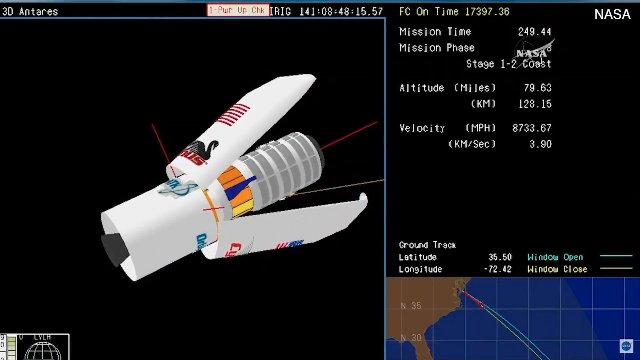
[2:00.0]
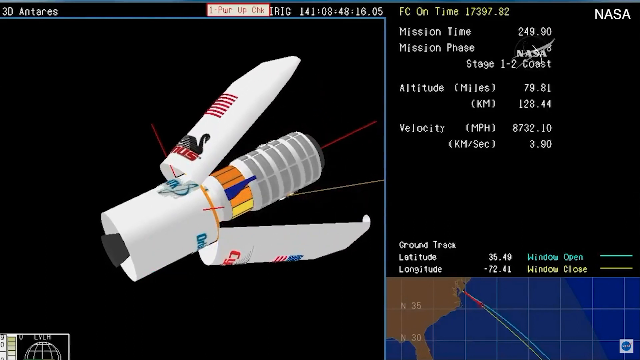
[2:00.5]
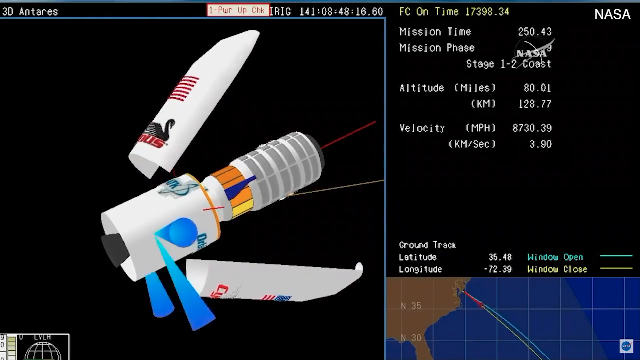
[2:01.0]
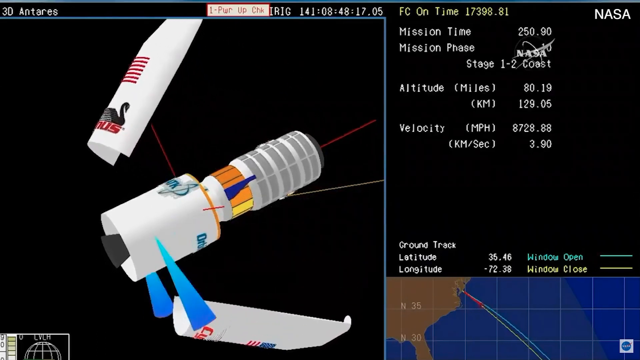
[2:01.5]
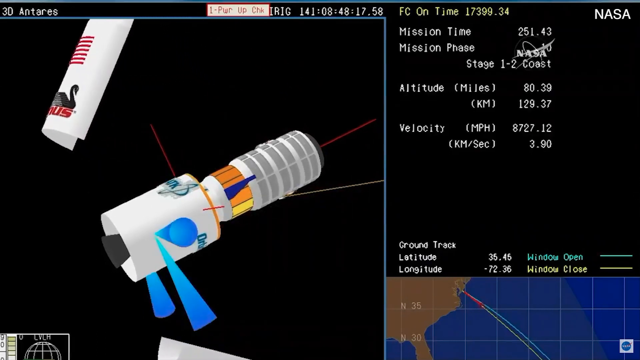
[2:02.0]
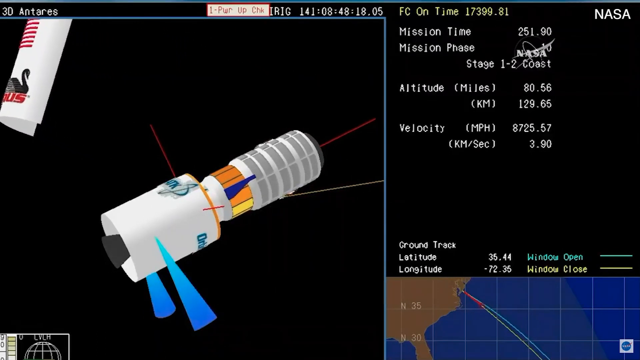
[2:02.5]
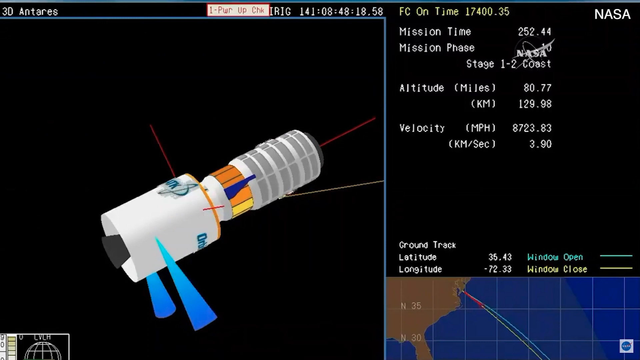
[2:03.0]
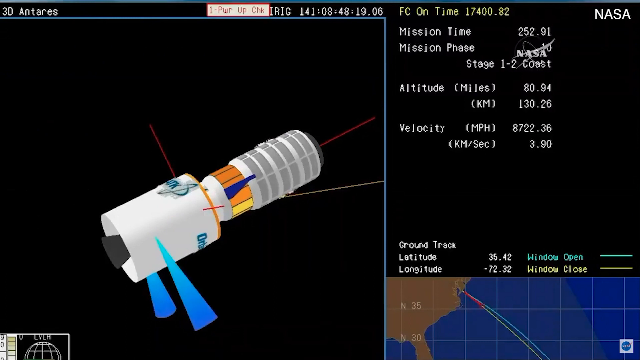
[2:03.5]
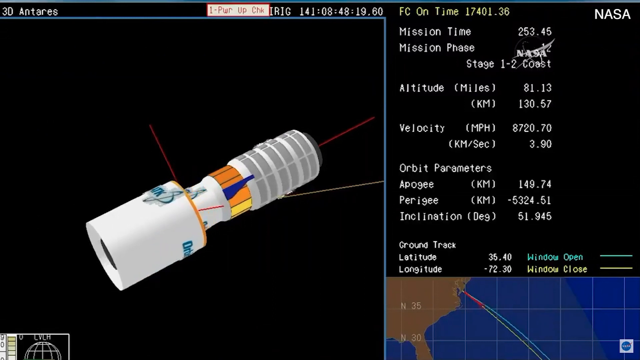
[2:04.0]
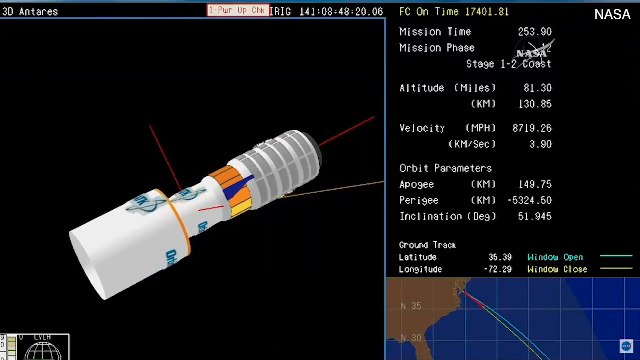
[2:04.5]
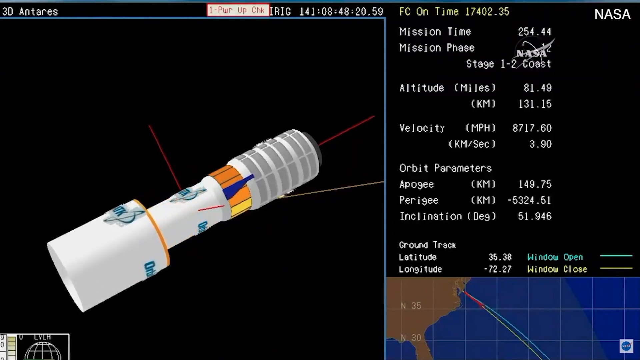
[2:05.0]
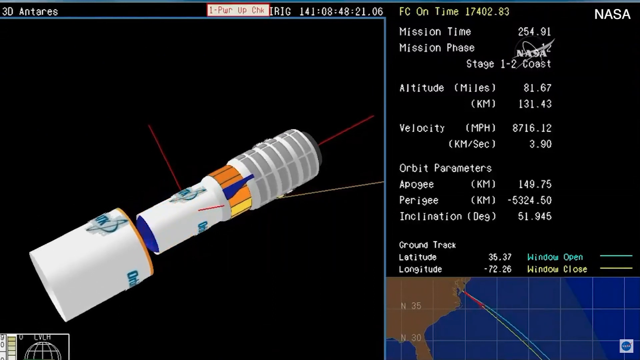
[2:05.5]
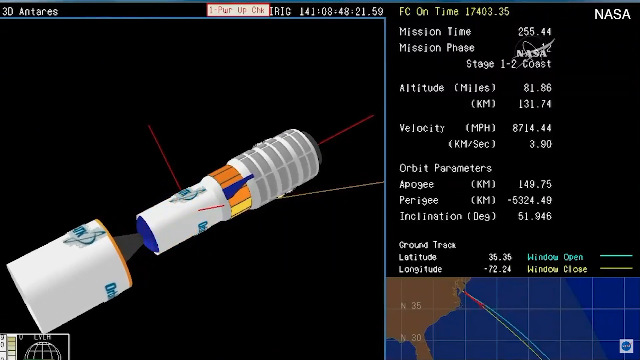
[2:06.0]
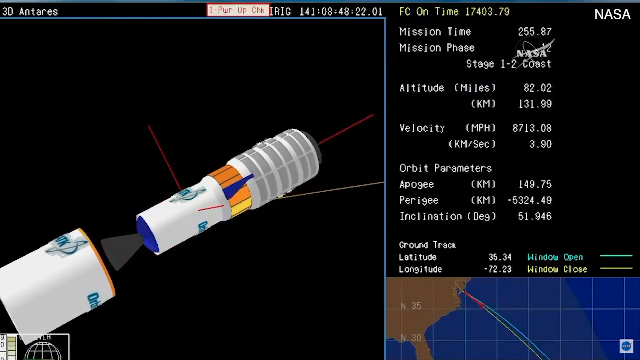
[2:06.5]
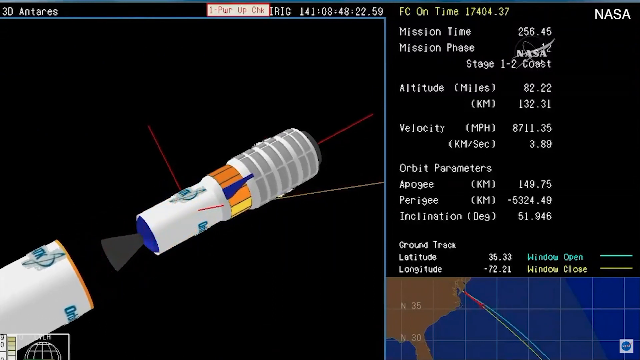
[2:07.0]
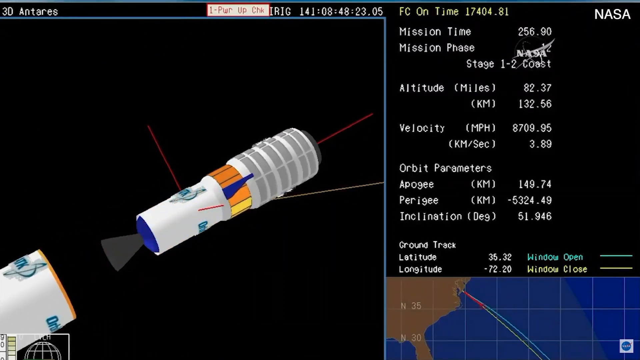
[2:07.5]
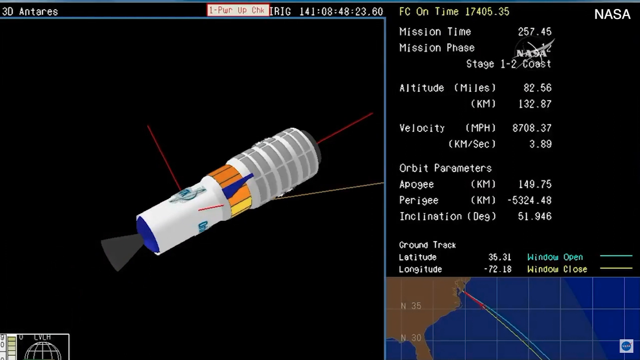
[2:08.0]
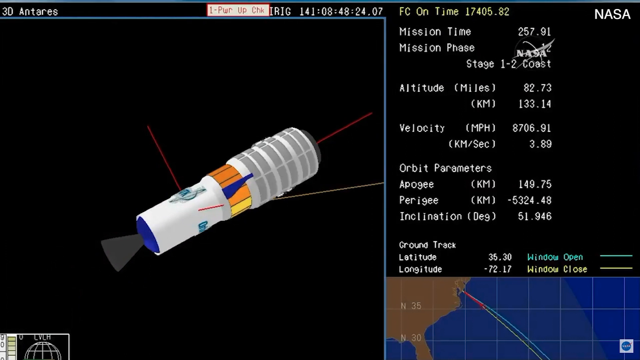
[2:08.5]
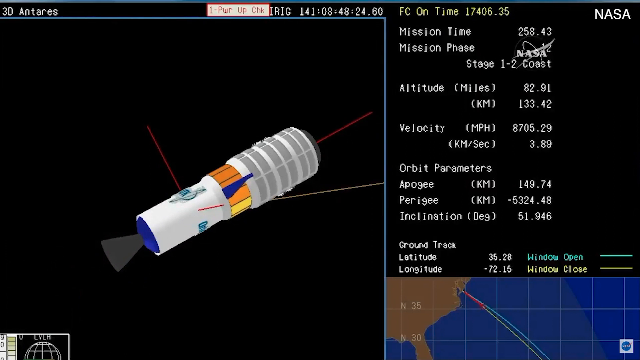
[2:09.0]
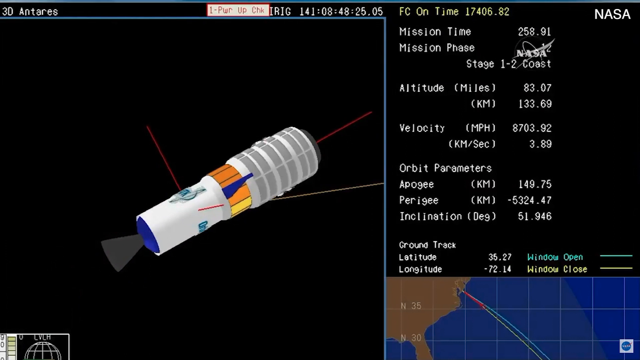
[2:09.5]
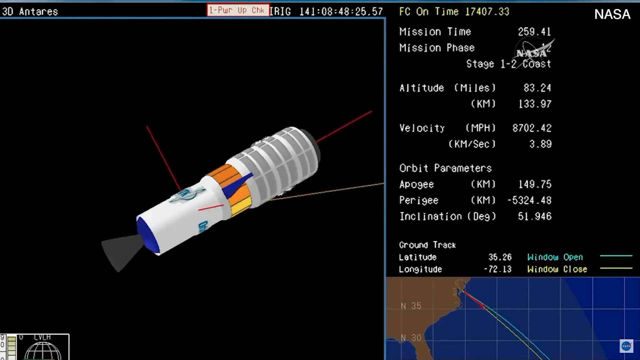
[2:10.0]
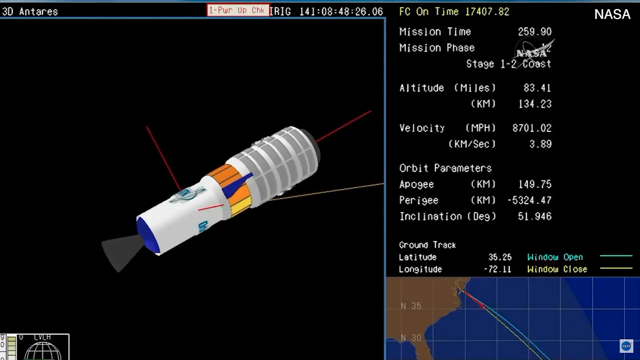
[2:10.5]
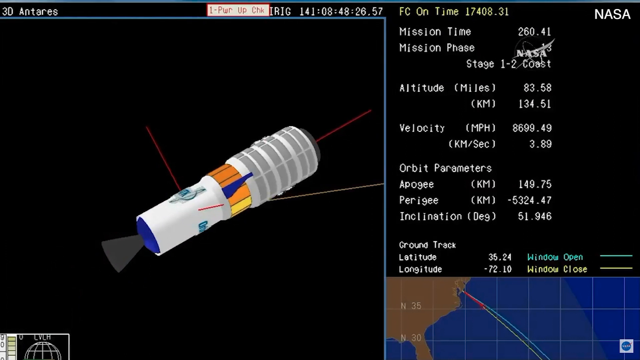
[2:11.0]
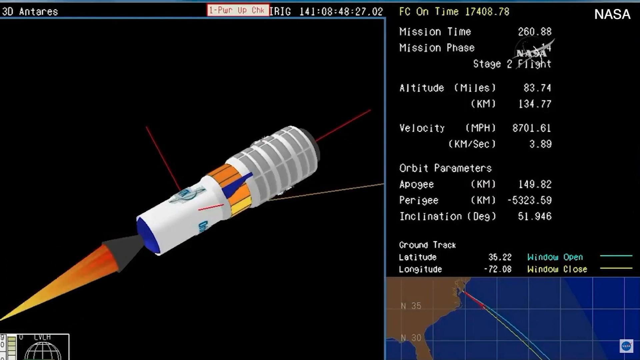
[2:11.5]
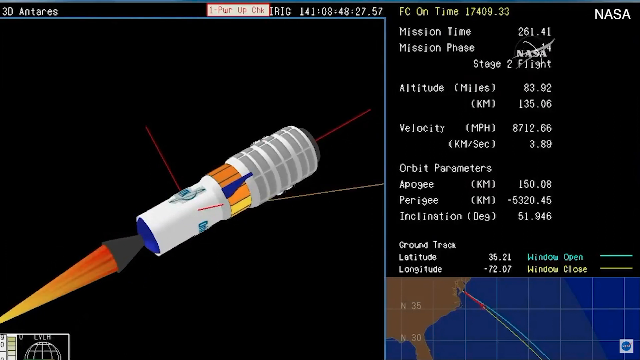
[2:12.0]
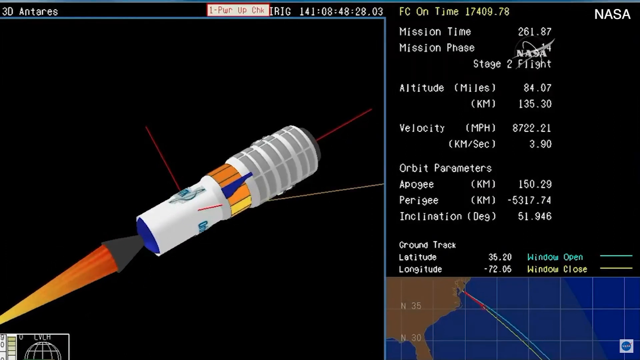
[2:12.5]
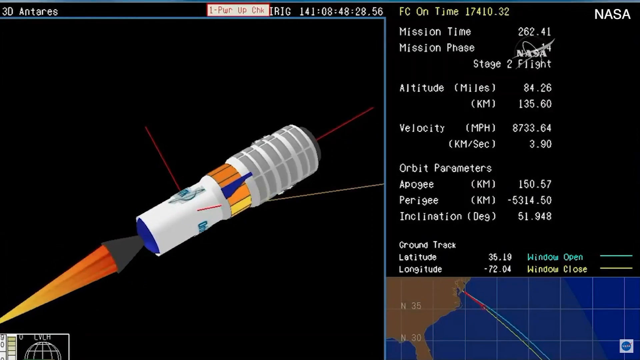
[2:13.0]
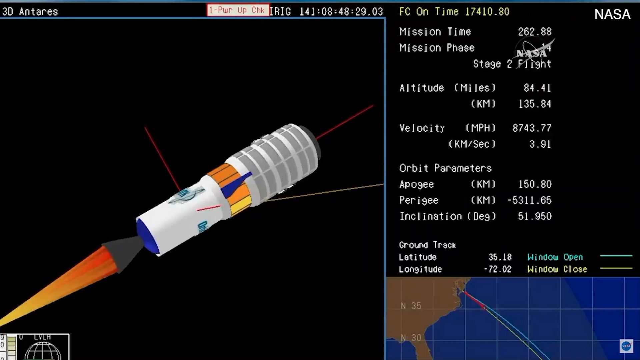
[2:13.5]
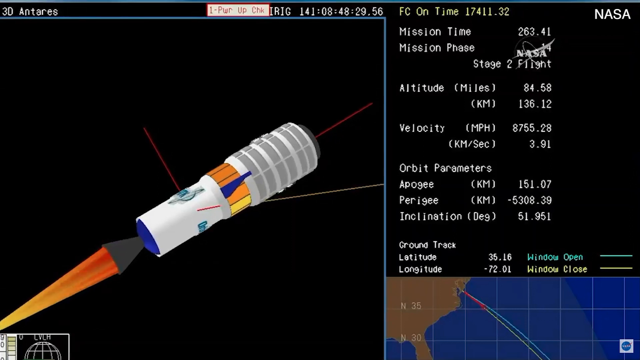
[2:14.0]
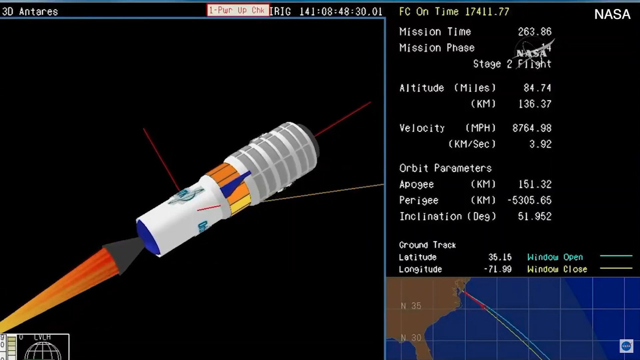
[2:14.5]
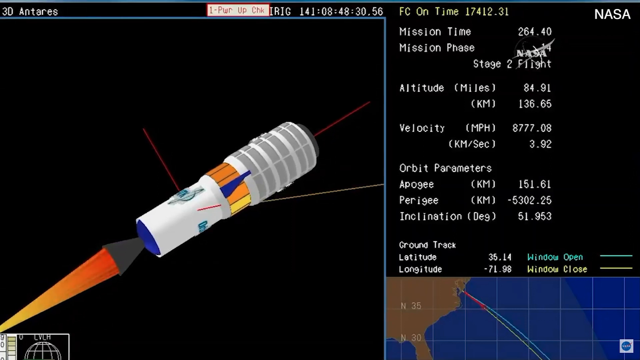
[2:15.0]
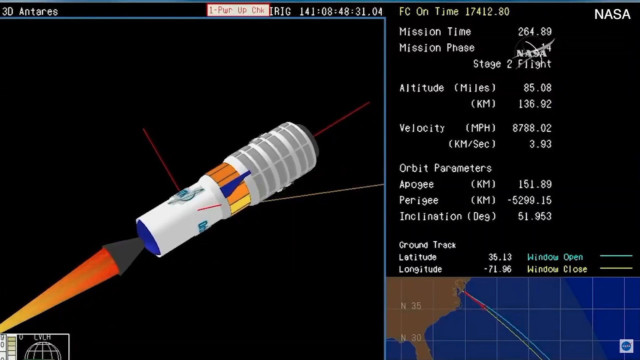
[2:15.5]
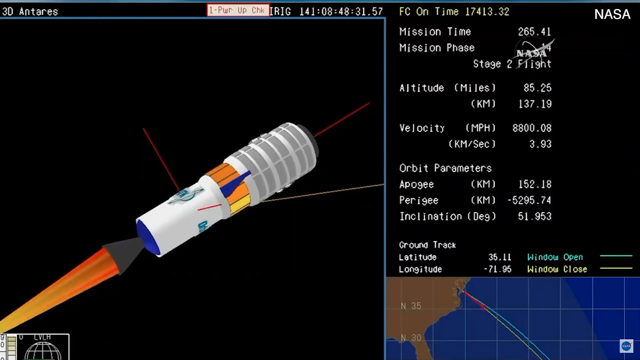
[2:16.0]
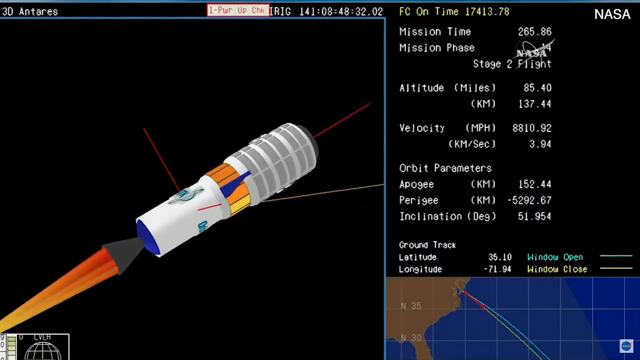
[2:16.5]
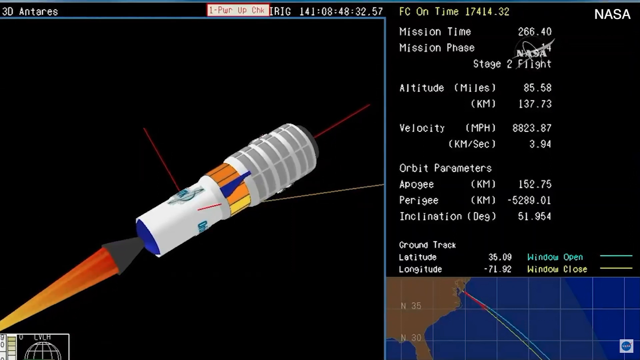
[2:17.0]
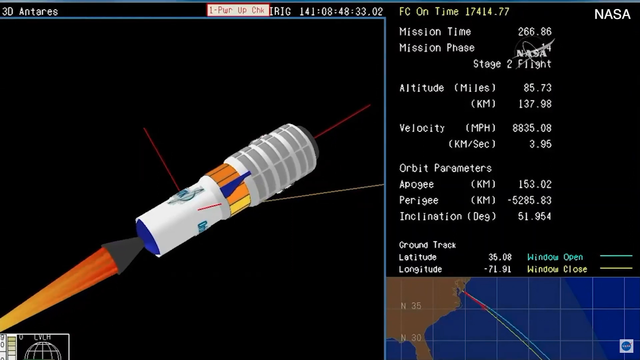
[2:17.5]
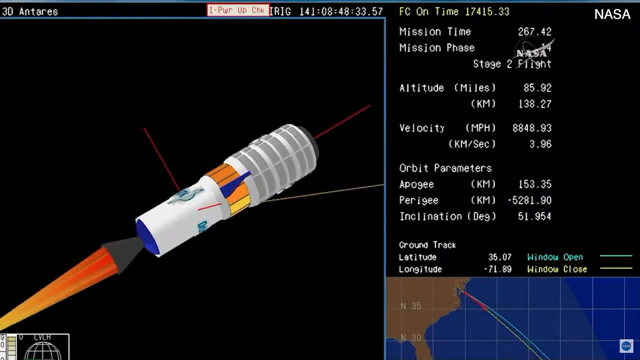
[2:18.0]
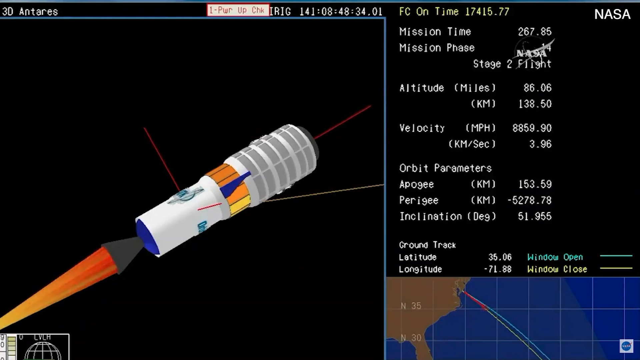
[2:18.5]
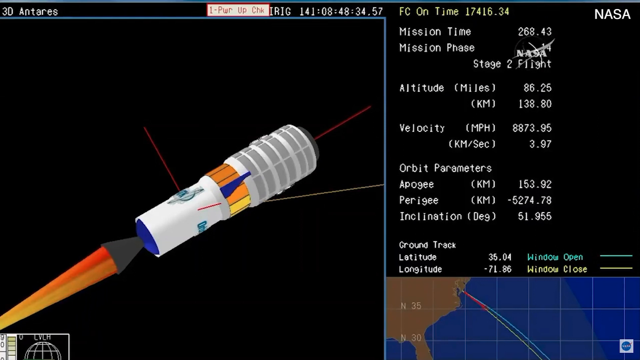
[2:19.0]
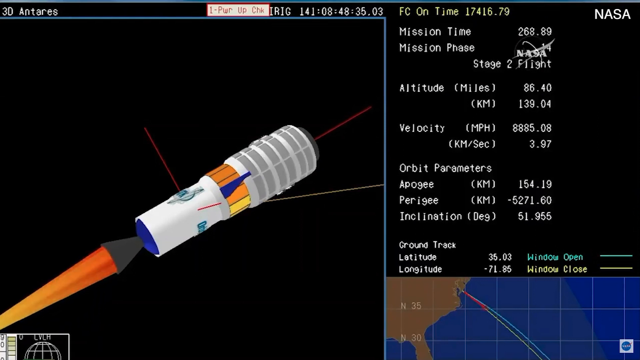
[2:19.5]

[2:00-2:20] After the explosion, components of the NASA rocket move as the rocket travels through the air, and a module is seen moving through the air. Parts of the rocket, such as a side section, leave it and fall away. The colors of the rocket contrast with the background, and the side of the rocket is visible.